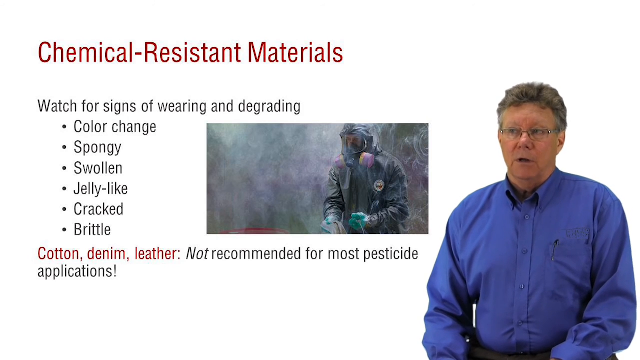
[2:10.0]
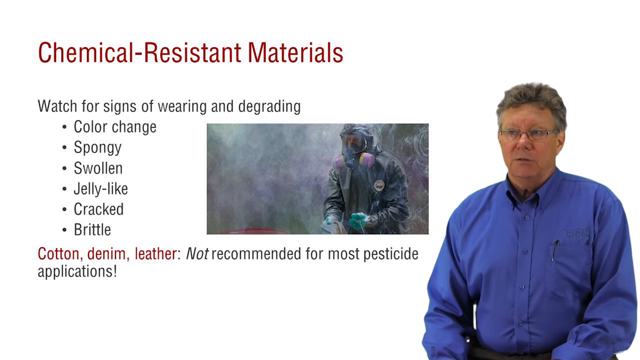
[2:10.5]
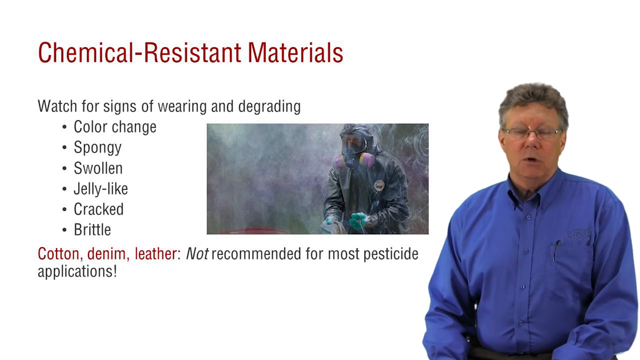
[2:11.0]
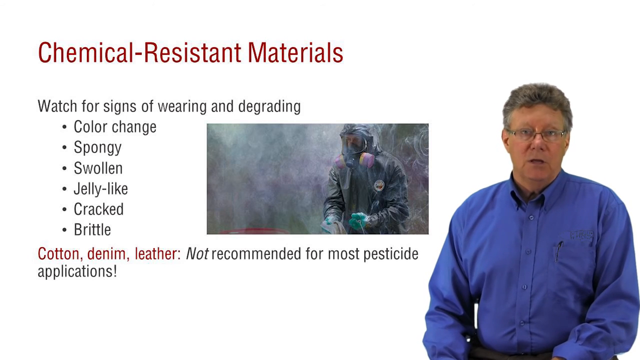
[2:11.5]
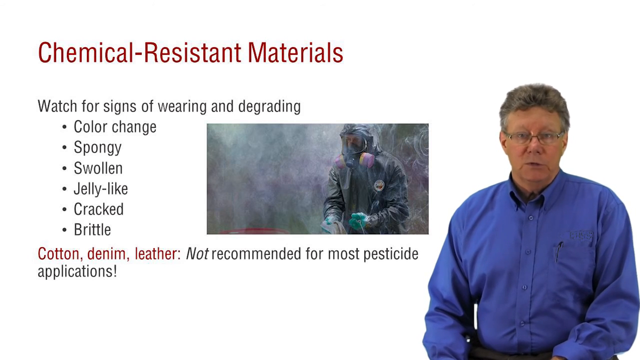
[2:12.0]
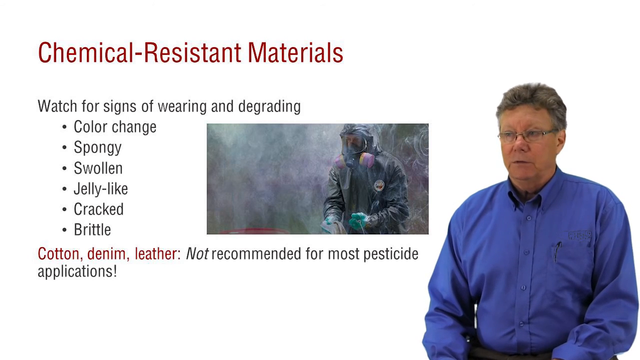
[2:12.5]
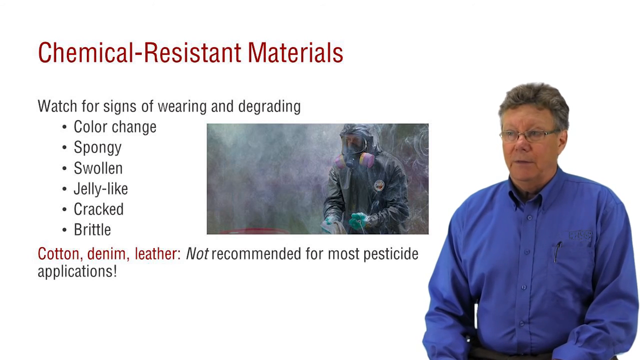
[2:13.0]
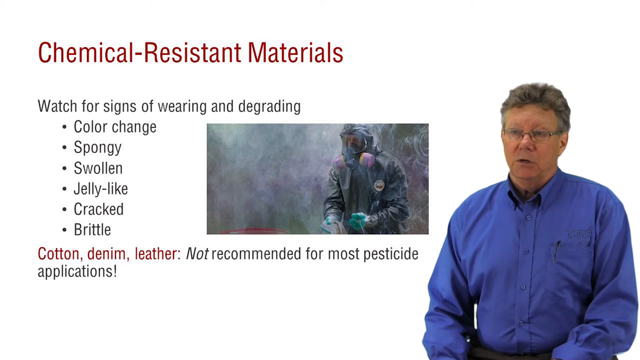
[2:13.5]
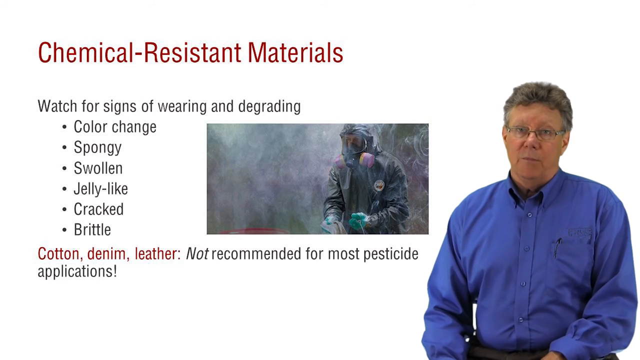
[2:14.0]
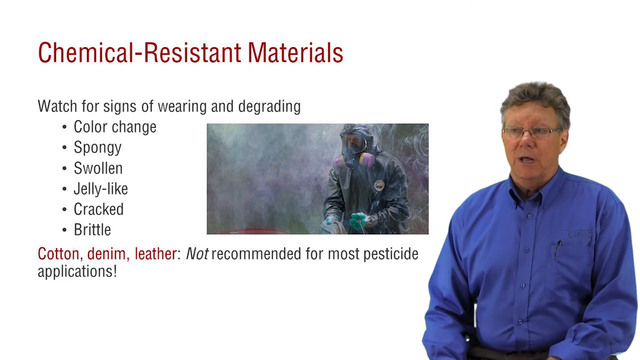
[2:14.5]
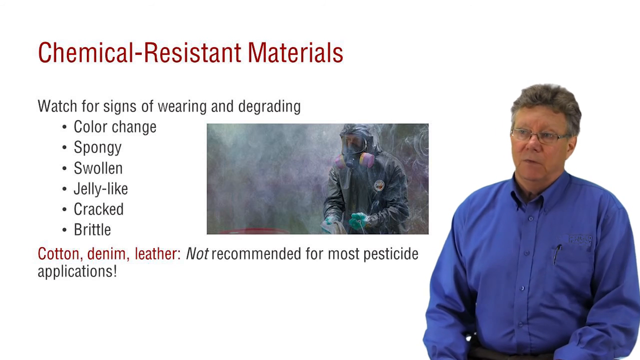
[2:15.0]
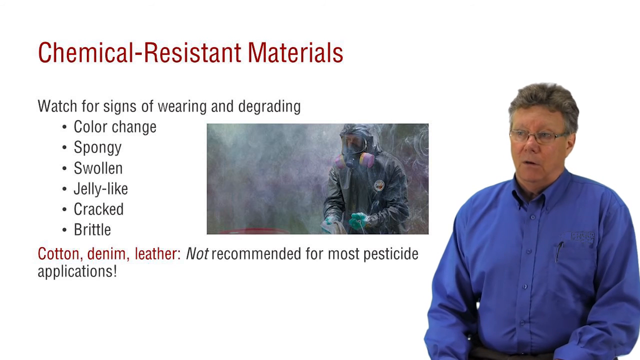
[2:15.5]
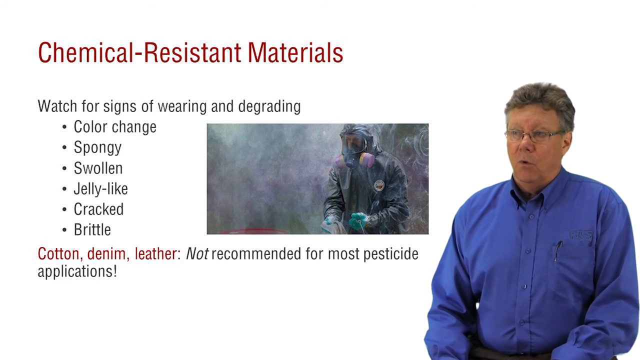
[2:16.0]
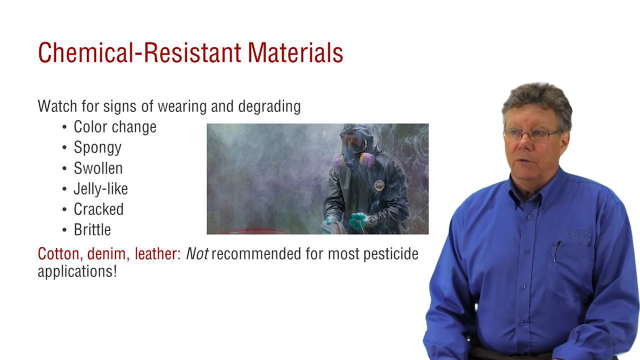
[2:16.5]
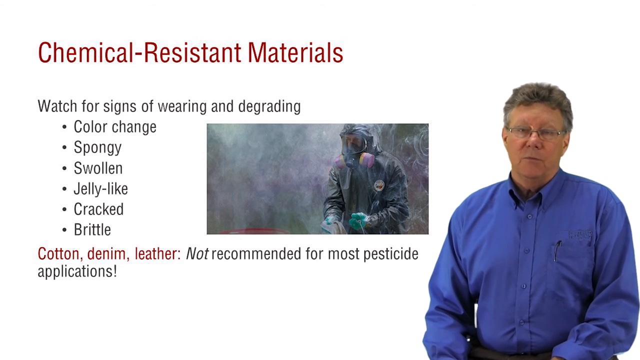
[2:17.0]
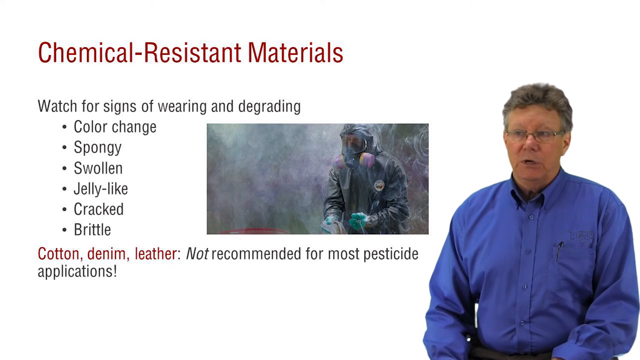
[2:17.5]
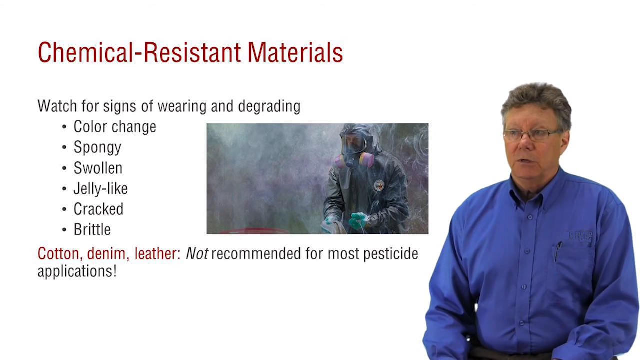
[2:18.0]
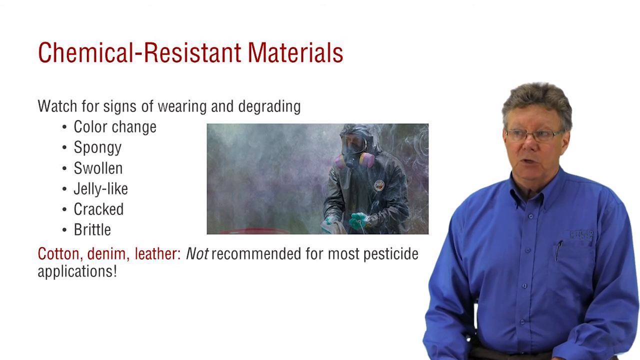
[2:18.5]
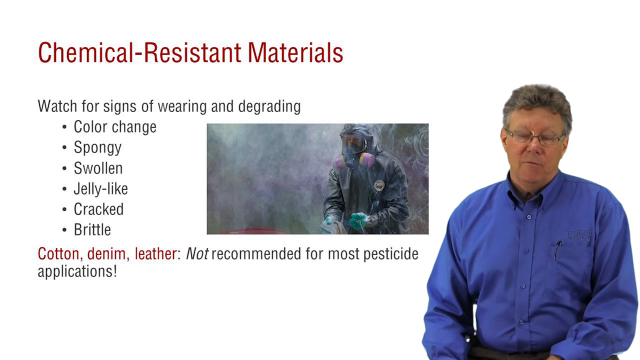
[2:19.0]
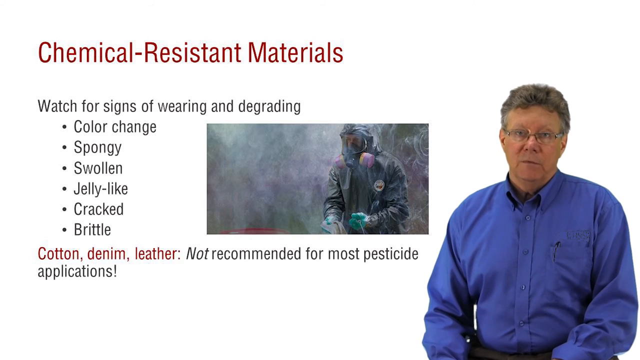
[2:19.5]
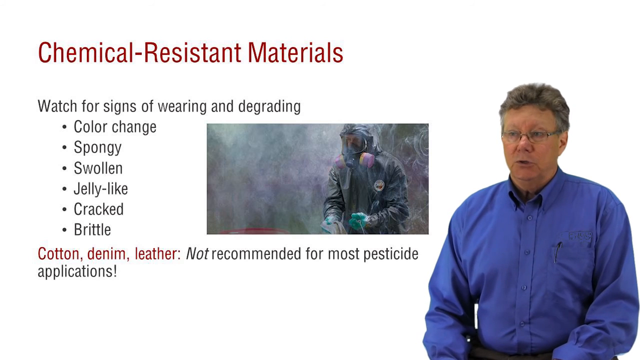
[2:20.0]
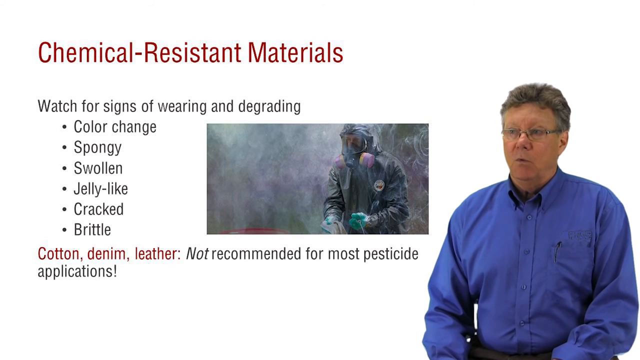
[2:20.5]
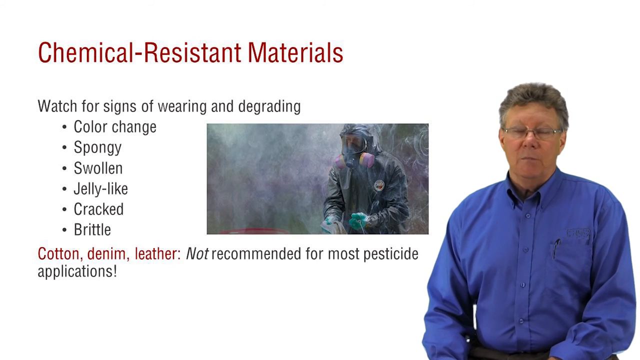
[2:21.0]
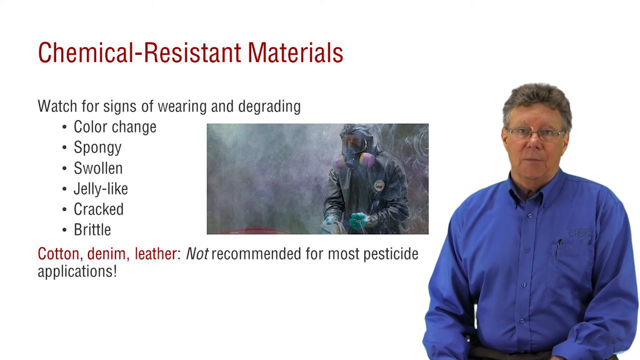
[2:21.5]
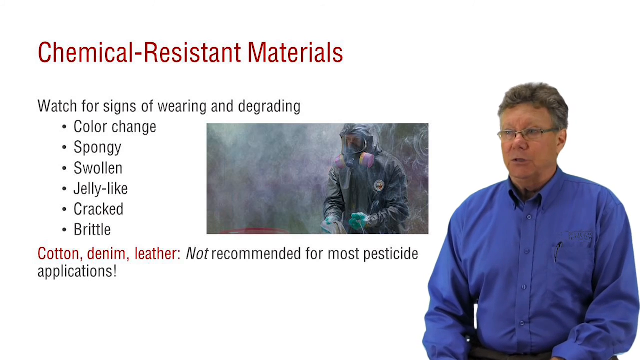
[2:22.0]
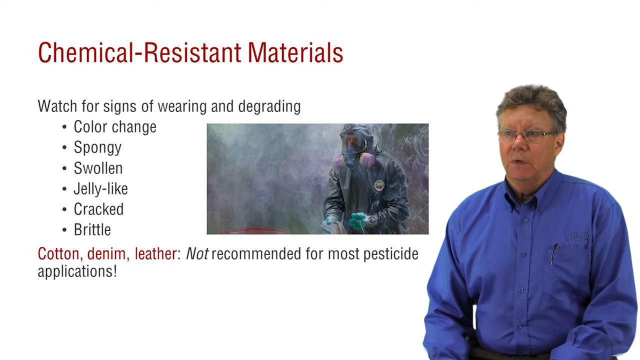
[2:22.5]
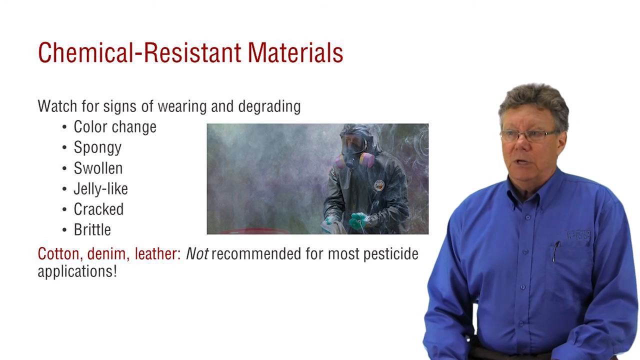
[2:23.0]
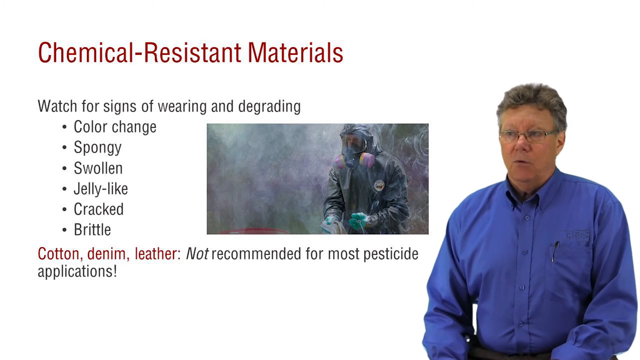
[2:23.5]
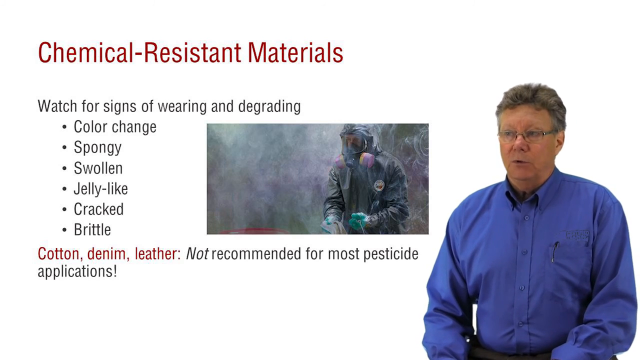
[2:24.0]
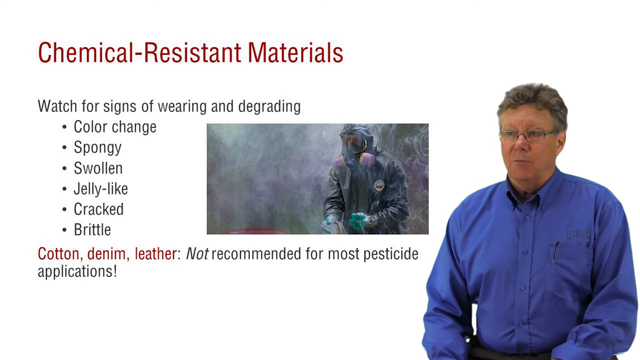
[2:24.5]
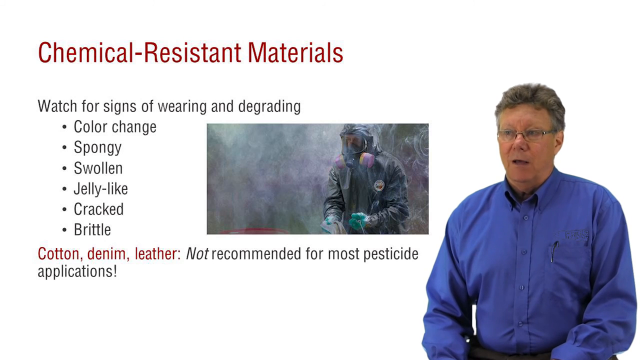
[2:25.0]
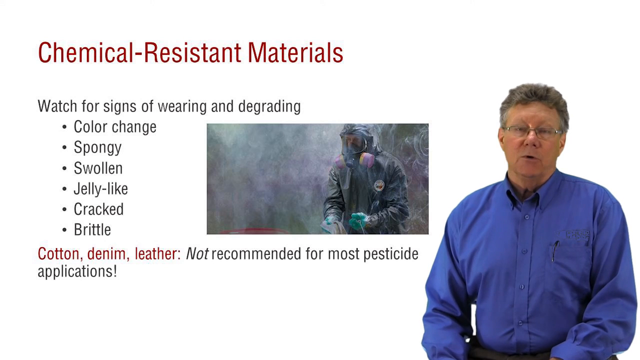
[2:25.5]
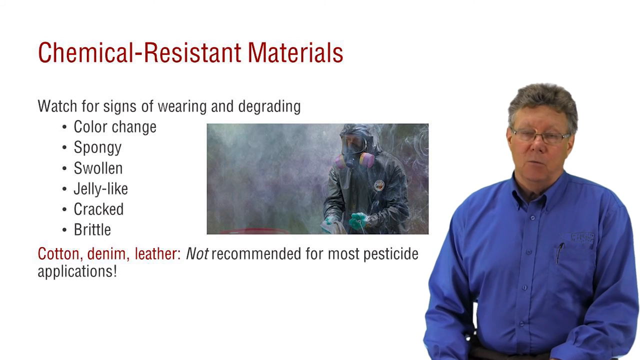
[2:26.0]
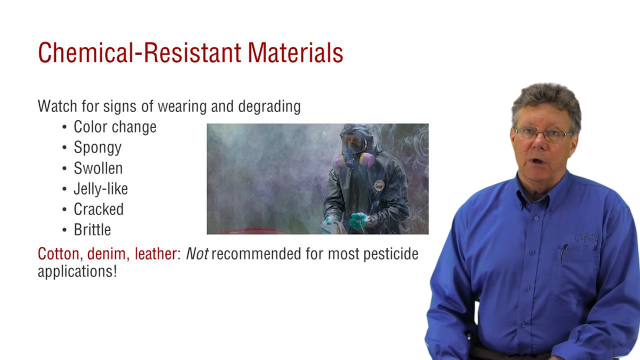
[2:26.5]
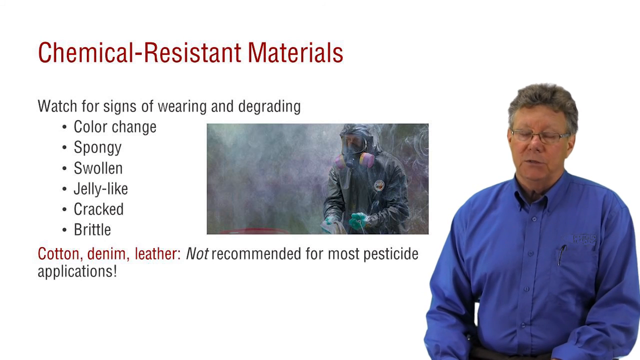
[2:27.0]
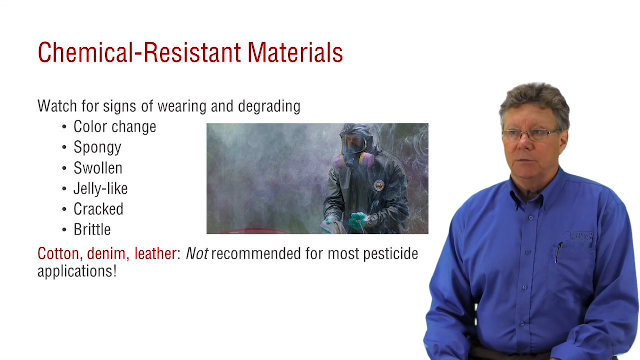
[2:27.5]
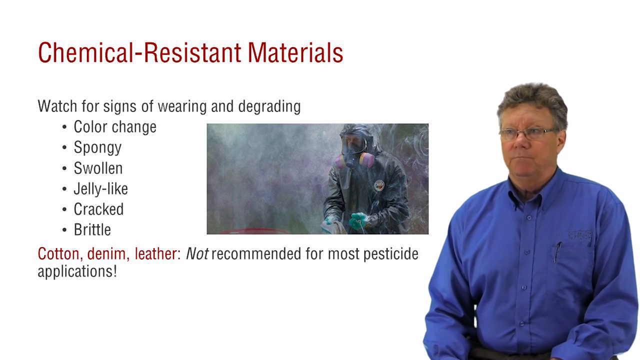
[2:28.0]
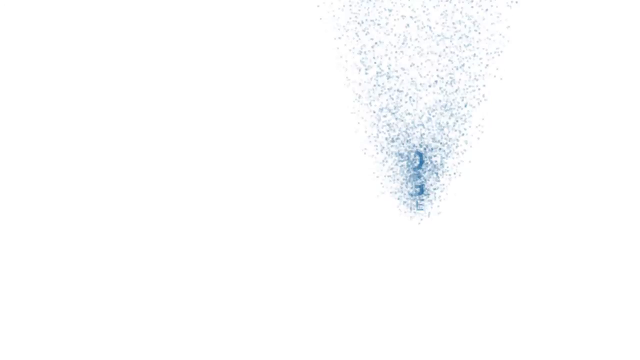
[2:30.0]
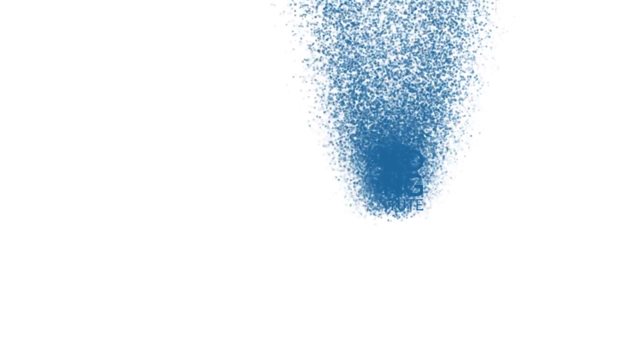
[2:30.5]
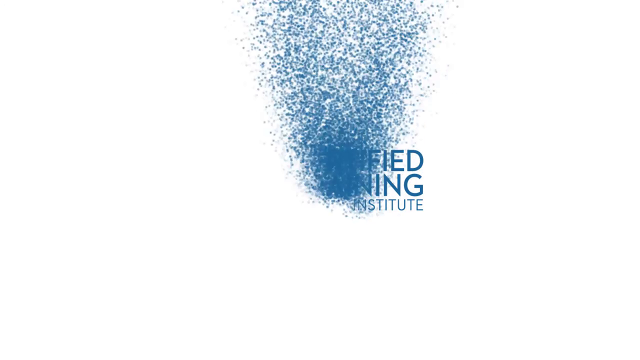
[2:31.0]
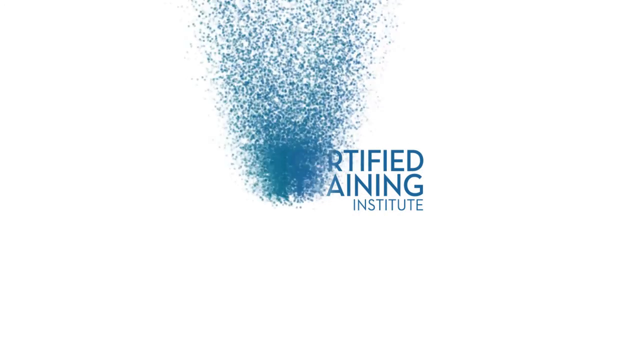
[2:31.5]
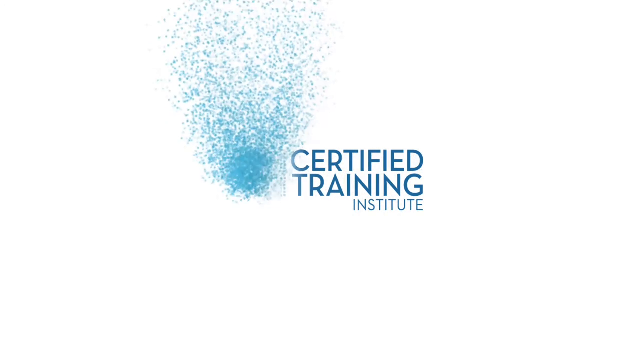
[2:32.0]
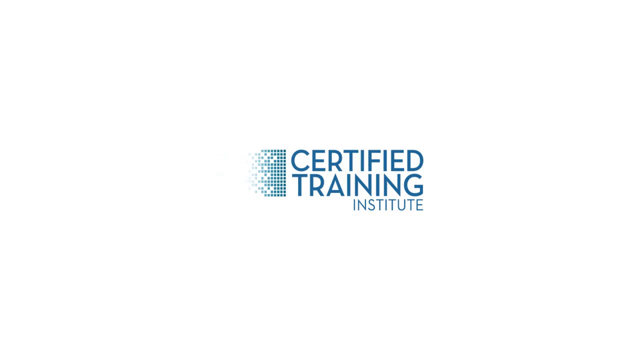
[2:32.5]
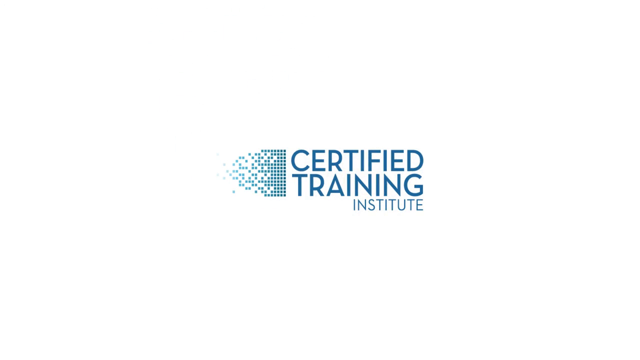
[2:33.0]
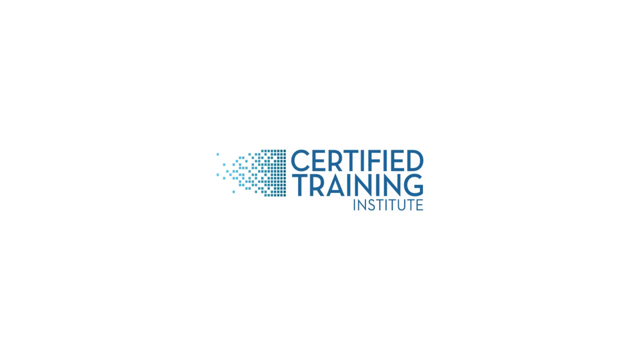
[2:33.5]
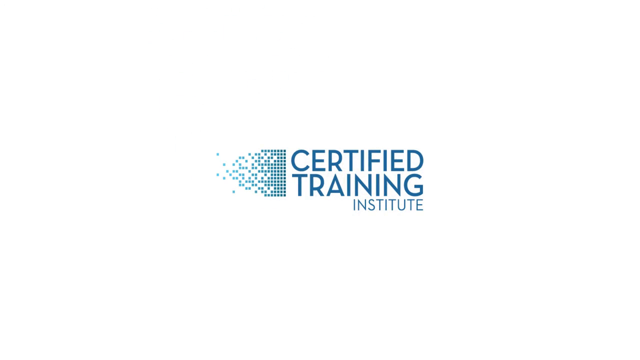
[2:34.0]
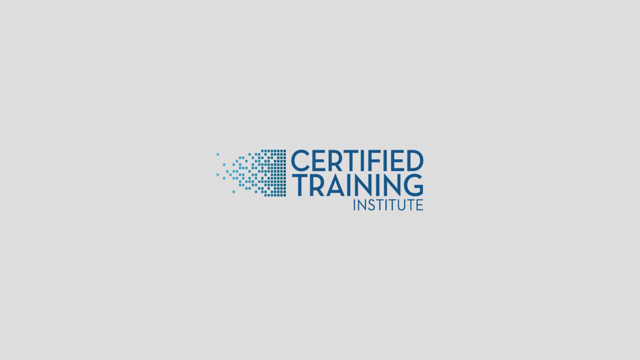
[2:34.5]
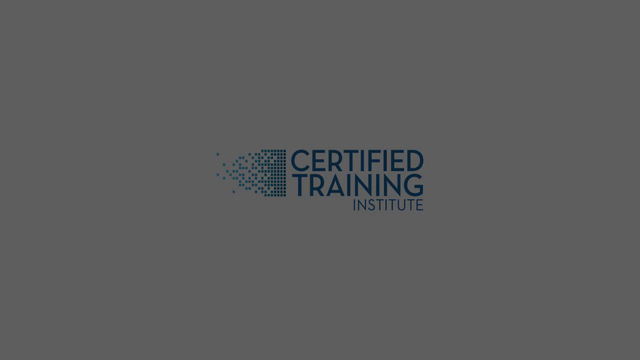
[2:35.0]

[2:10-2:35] A man in a long-sleeve blue shirt, with a pen in his pocket, clear glasses and gray hair, is shown beside red text reading "chemical resistant materials," then "watch for signs of wearing and degrading: color change, spongy, swollen, jelly-like, cracked, brittle," then in red "cotton, denim, leather," and "not recommended for most pesticide applications." Another man is covered from head to toe. The video then goes to a white screen, little blue dots appear, and "certified training institute" comes across the screen with dots to the left. Red text reads "personal protective equipment," followed by "required PPE is determined by the" and, each in red, "toxicity of the pesticide," "formulation of the pesticide" and "activity you are performing," then "measuring, mixing and loading, applying and maintenance operations." The man talks while a man in protective covering is shown, with acceptable protective covering for pesticide use underneath: long rubber boots, a hard hat, some green lotion that looks like Dawn detergent, a full face mask with a clear front, and overalls. Then "personal protective equipment," "read the label," "follow directions for PPE," "handlers," "applicators" and "early entry workers," each with a checkmark, and "minimum requirements are given" appear.